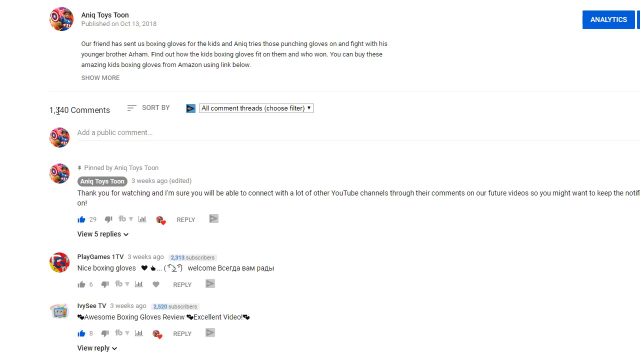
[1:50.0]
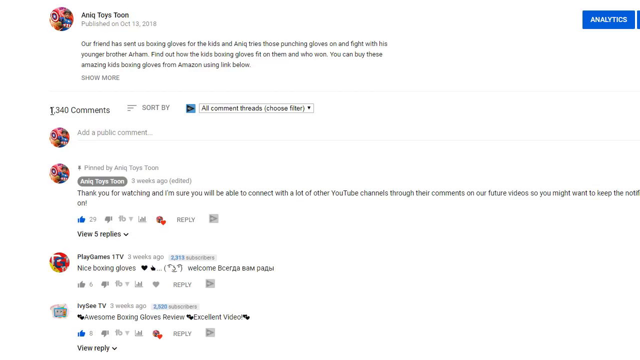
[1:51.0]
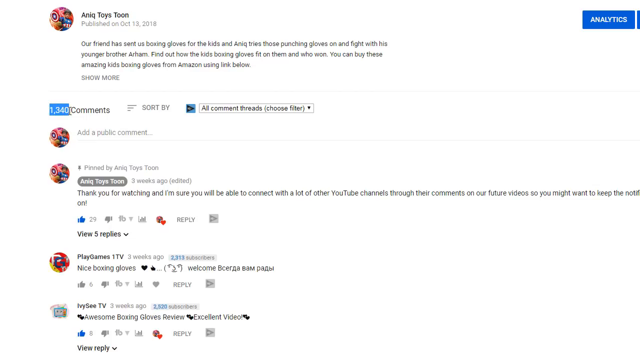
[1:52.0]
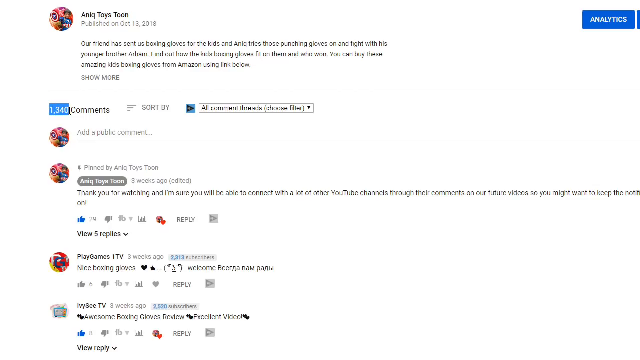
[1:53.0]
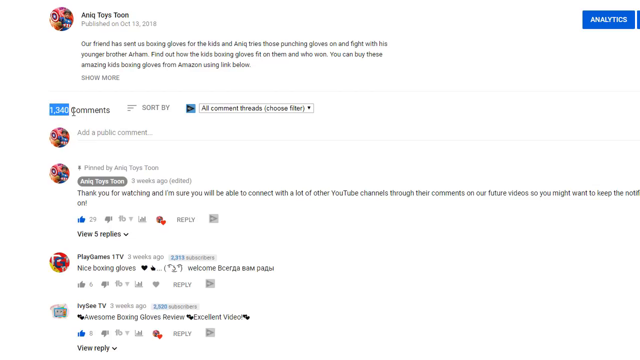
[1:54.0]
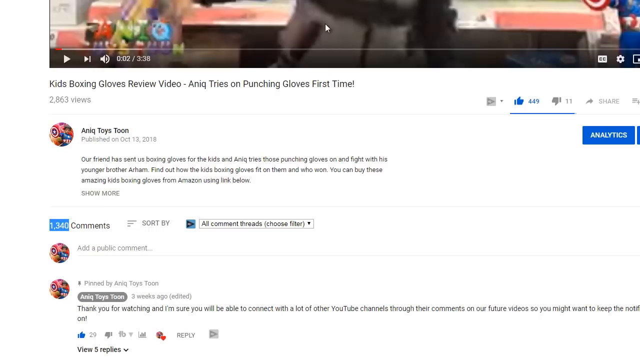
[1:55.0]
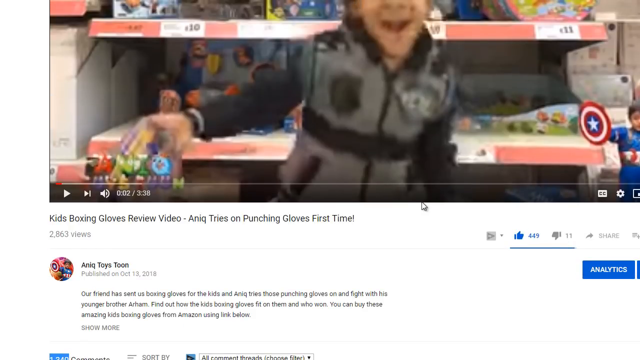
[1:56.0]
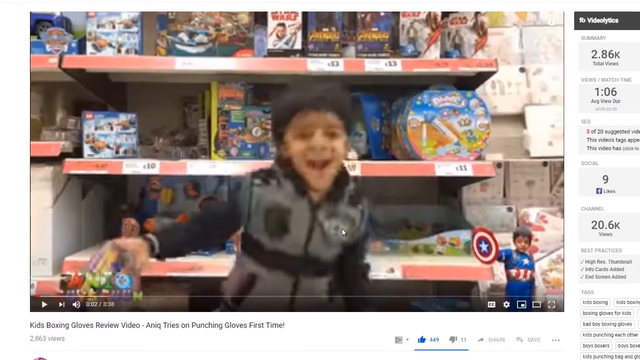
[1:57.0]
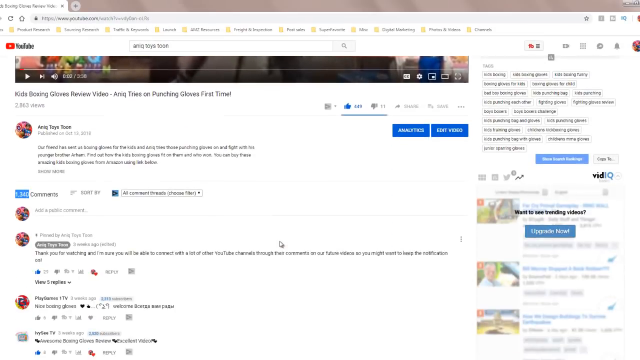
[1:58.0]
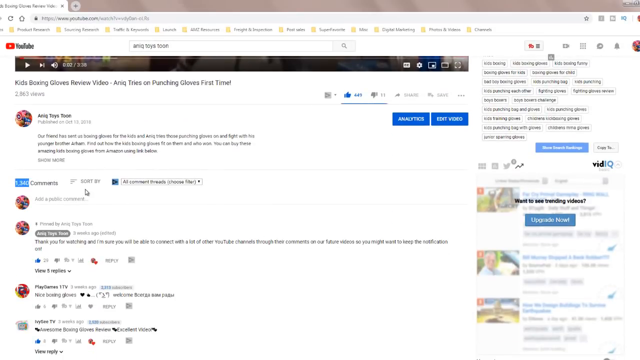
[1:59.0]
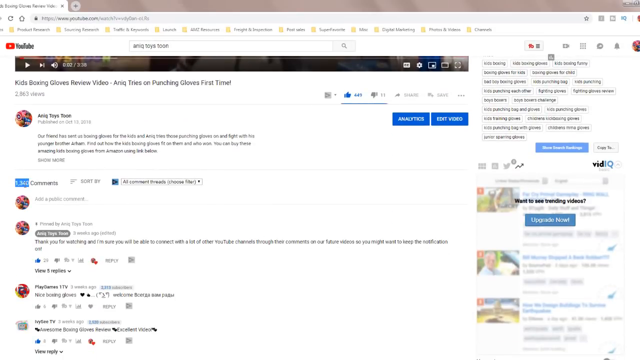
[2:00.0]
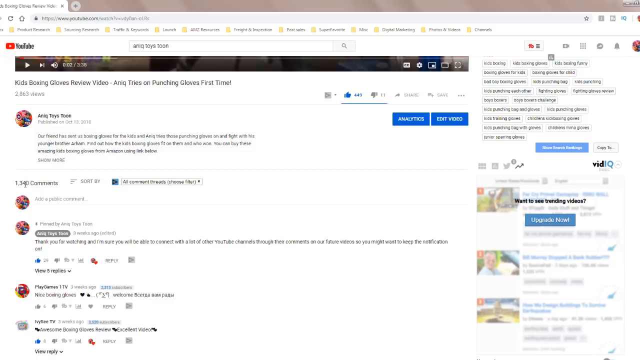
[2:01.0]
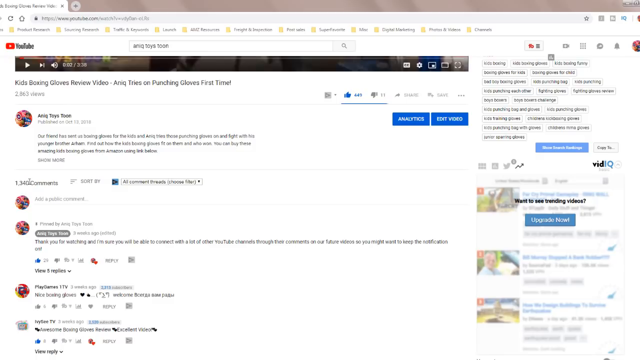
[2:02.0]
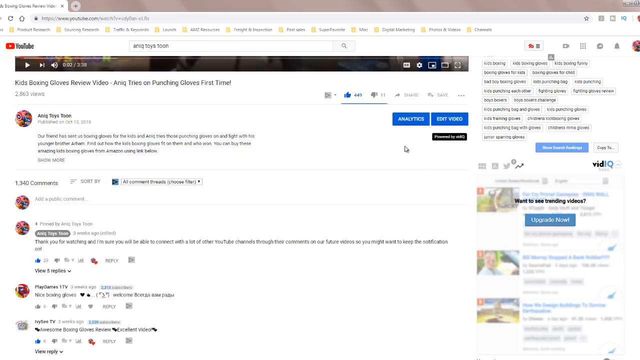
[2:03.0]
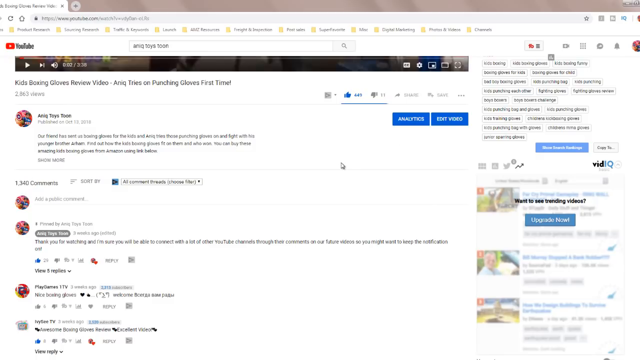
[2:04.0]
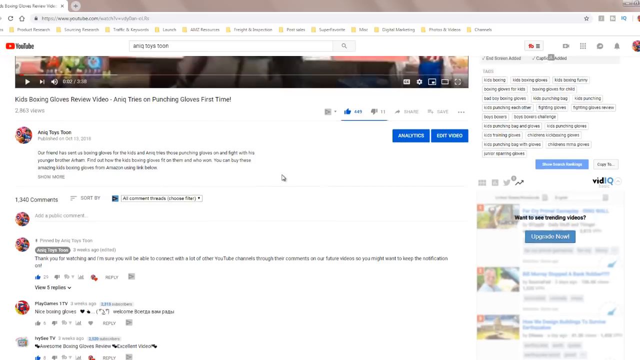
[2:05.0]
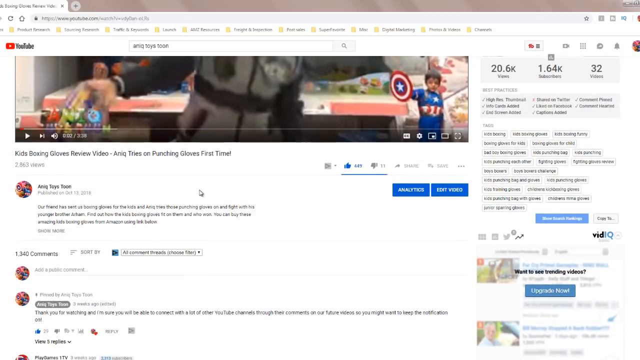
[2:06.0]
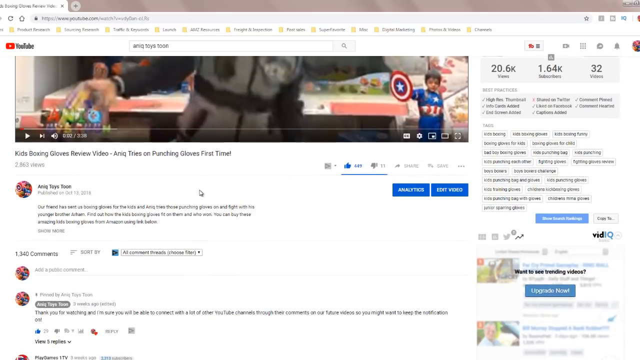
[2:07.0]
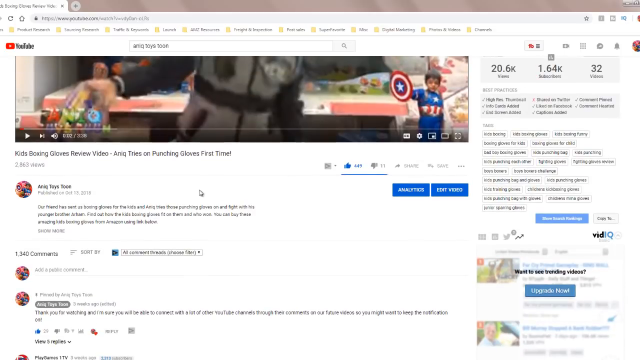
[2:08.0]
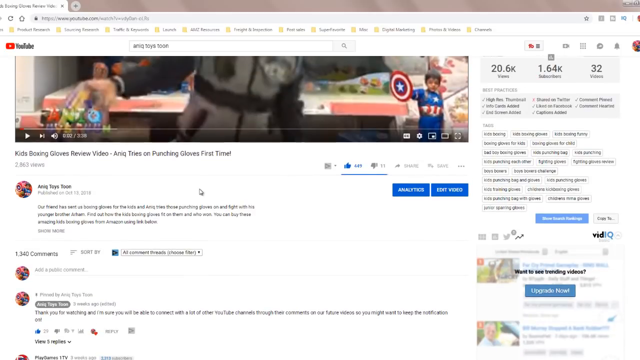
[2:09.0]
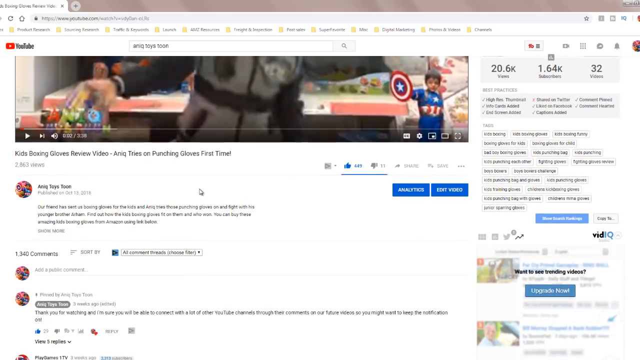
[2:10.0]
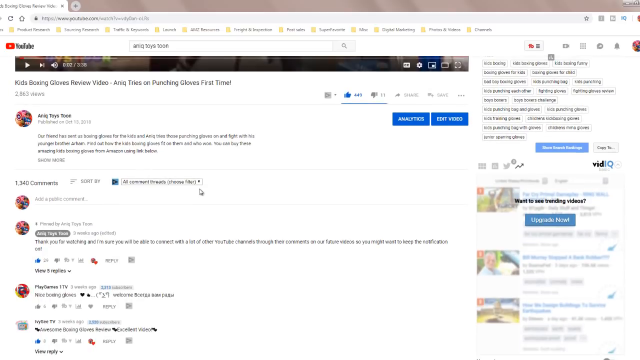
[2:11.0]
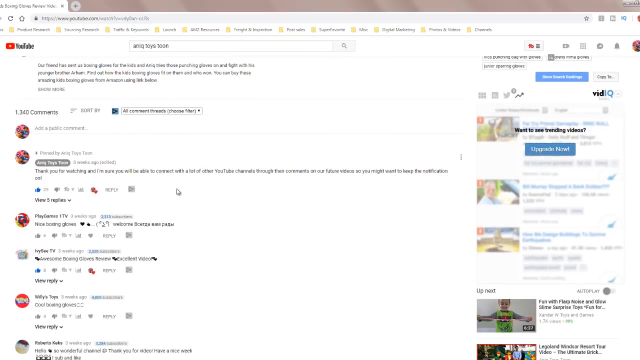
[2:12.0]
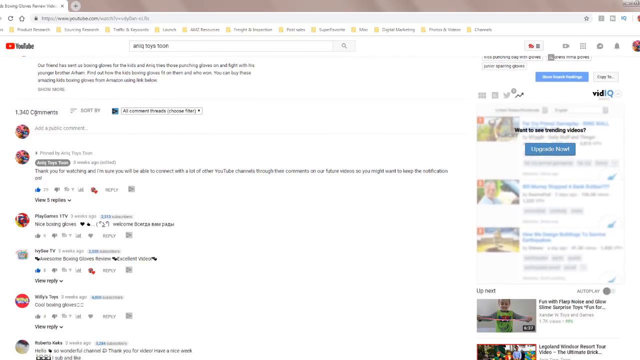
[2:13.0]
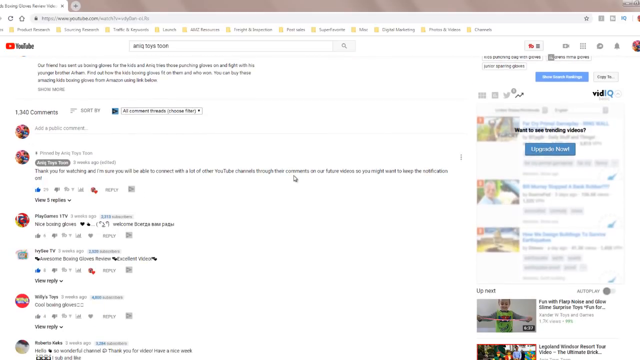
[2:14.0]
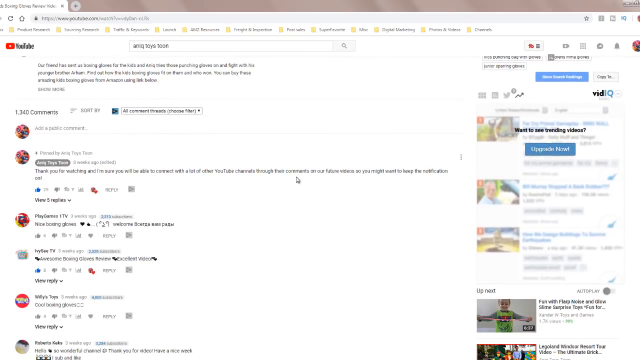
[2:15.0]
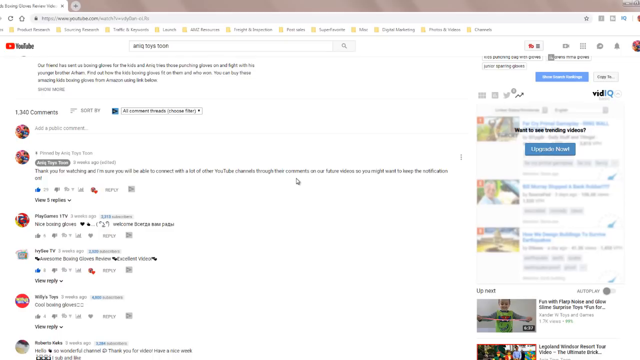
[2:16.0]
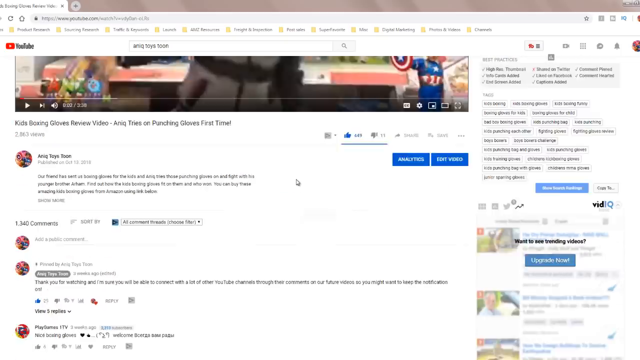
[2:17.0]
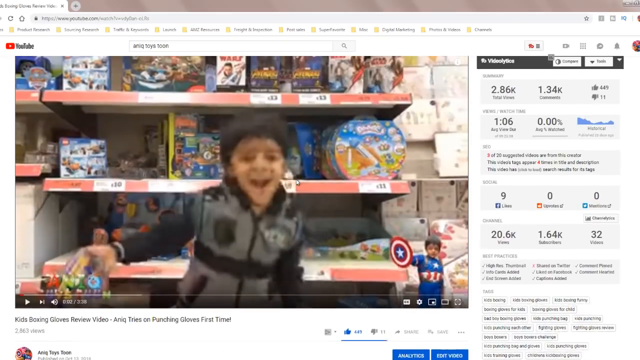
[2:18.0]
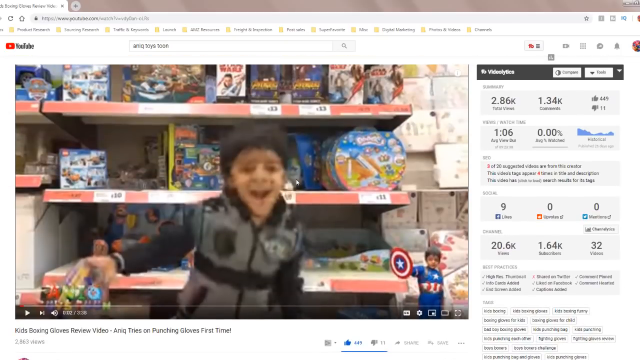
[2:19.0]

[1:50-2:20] The video of the little boy dancing excitedly shows 1,340 comments, and the person circles the number. One comment on the screen is by Aniktoi's Toon and reads: "Thank you for watching and I'm sure you will be able to connect with a lot of other YouTube channels through their comments on our future videos so you might want to keep the notification on." That comment has 29 likes and 5 responses. Another comment, by Play Games, says "nice boxing gloves". The word "analytics" is on the right-hand side of the screen, highlighted in blue and written in white. The person then scrolls up to the top of the video, whose caption reads "Kids Boxing Gloves Review. Aniq tries on punching gloves for the first time."